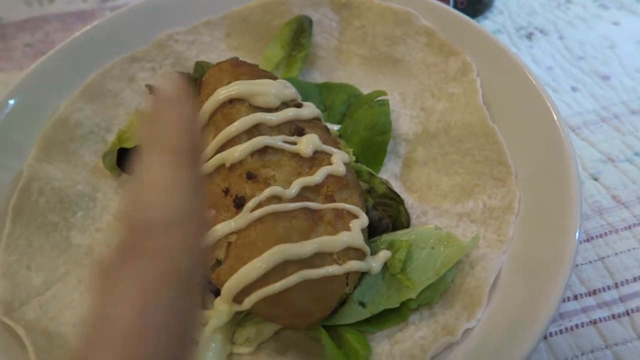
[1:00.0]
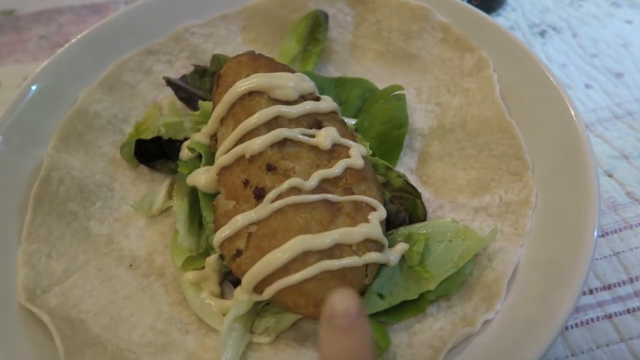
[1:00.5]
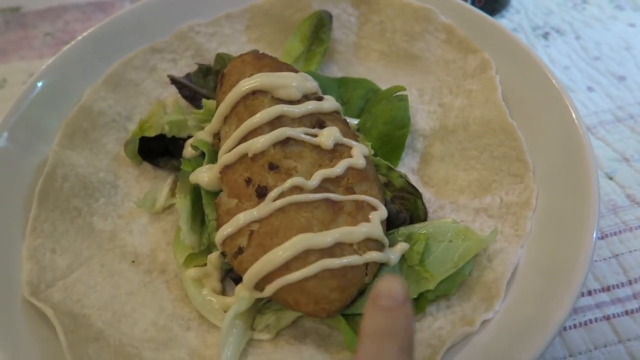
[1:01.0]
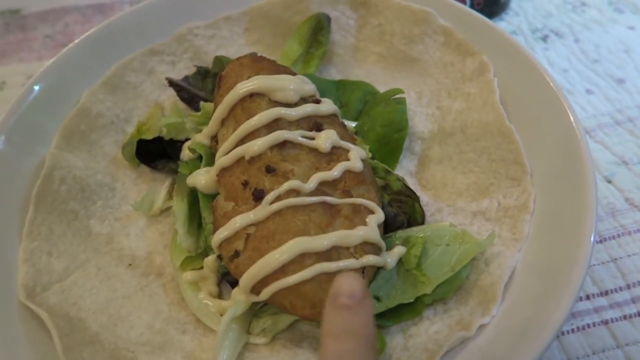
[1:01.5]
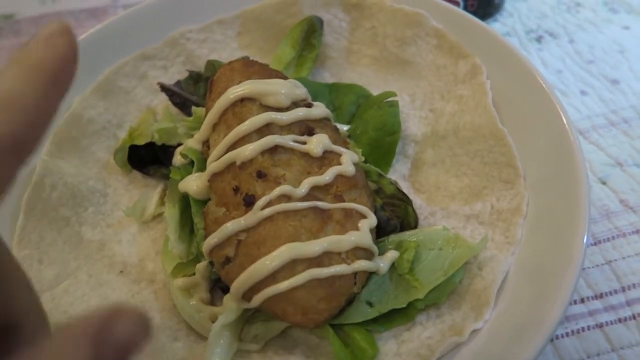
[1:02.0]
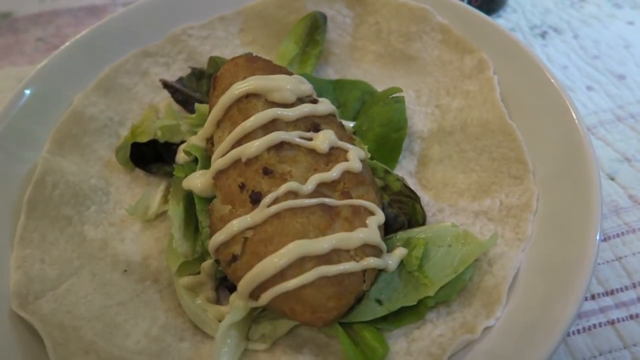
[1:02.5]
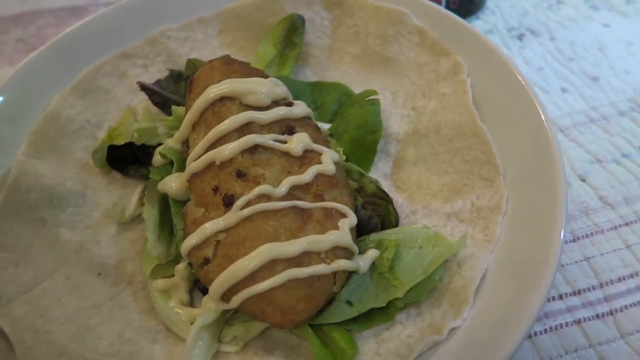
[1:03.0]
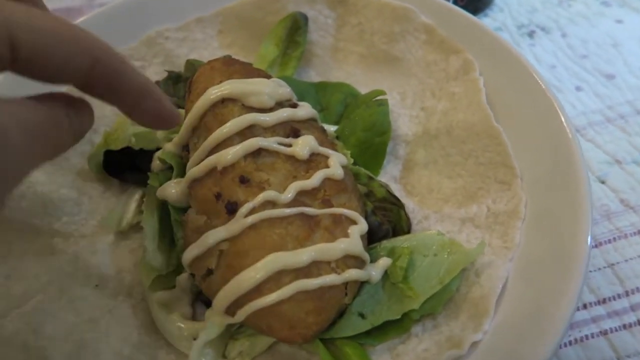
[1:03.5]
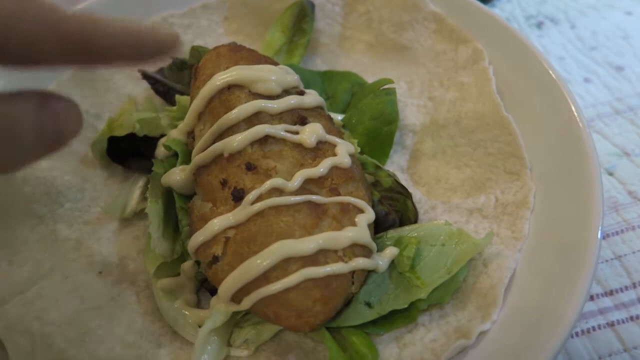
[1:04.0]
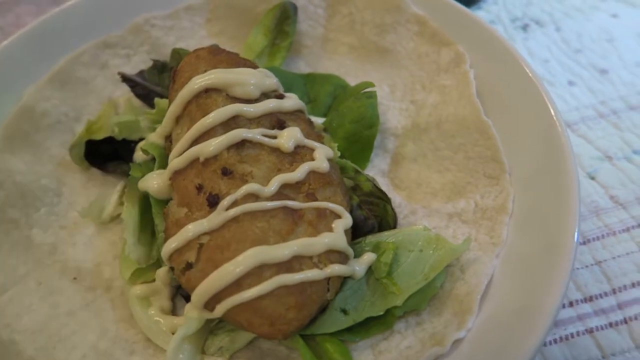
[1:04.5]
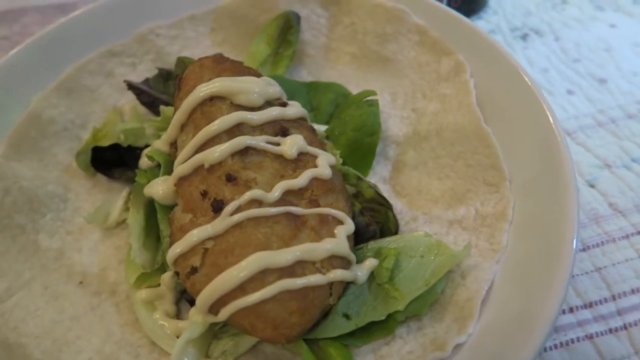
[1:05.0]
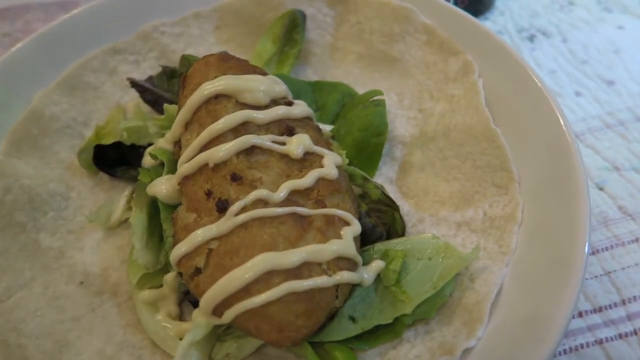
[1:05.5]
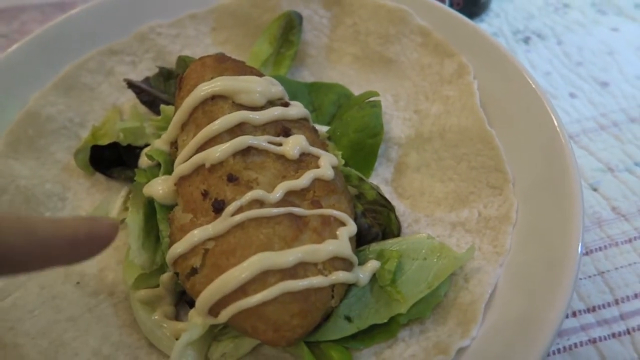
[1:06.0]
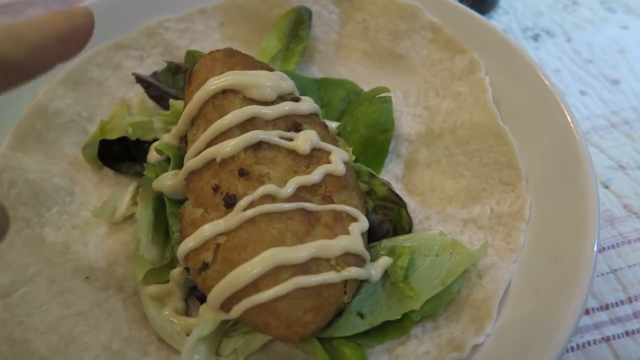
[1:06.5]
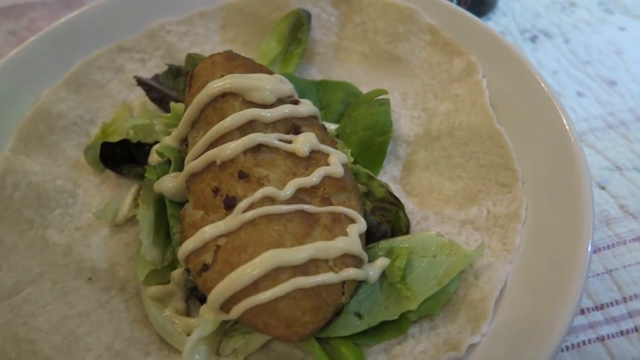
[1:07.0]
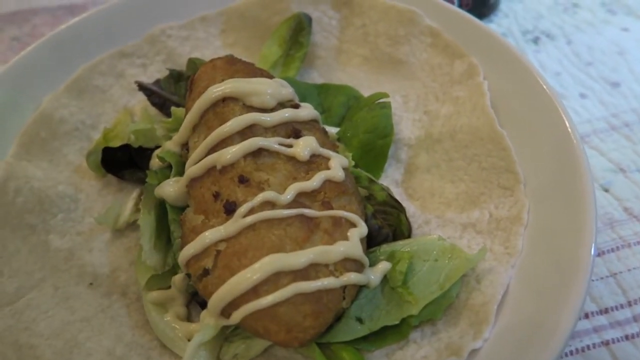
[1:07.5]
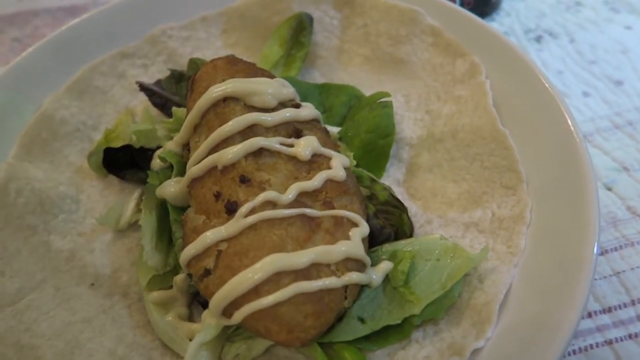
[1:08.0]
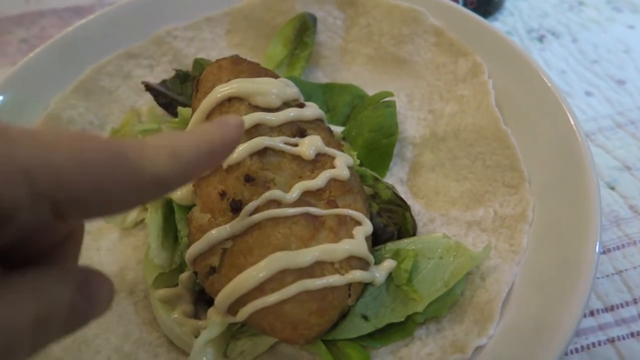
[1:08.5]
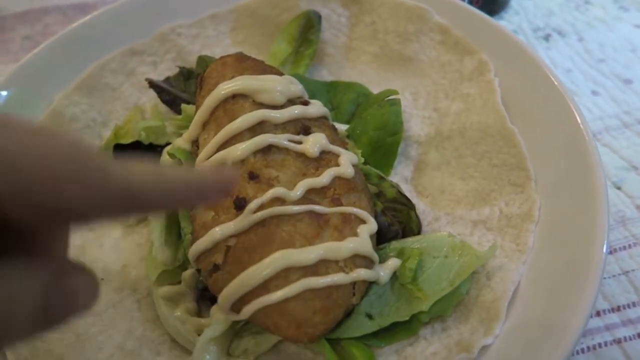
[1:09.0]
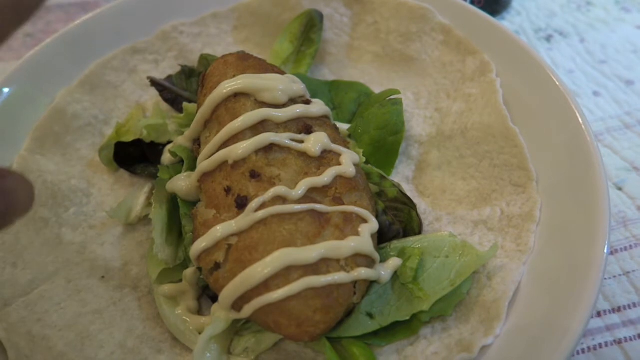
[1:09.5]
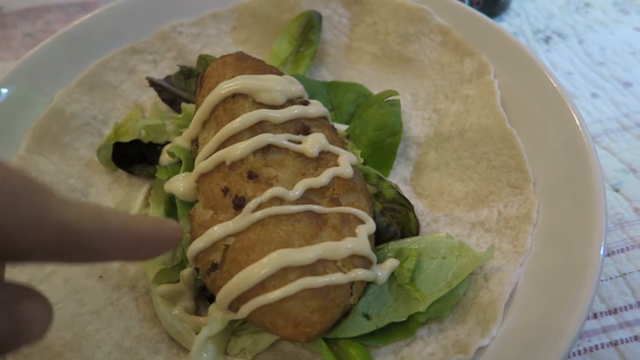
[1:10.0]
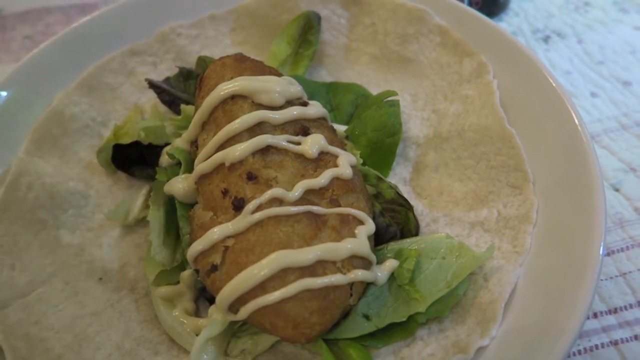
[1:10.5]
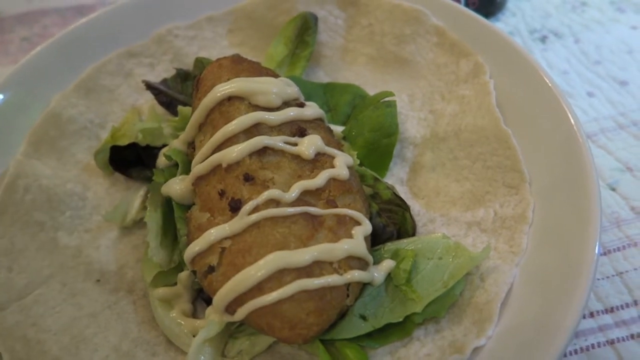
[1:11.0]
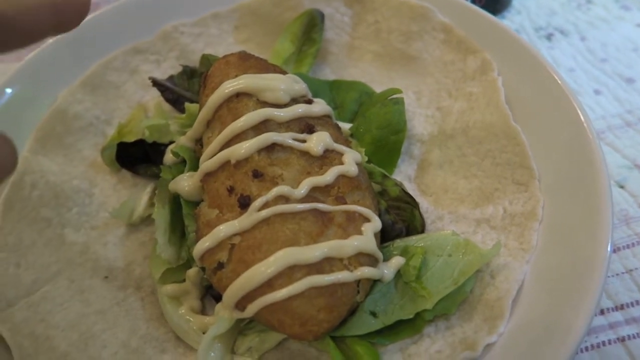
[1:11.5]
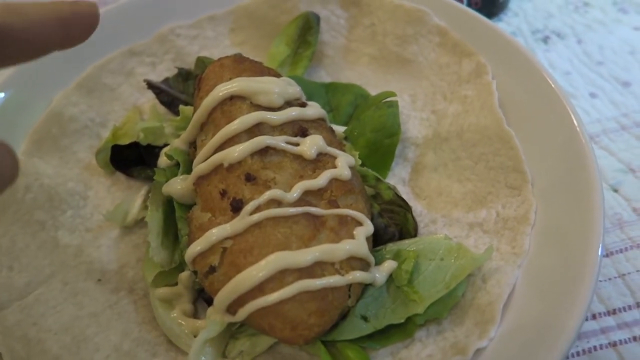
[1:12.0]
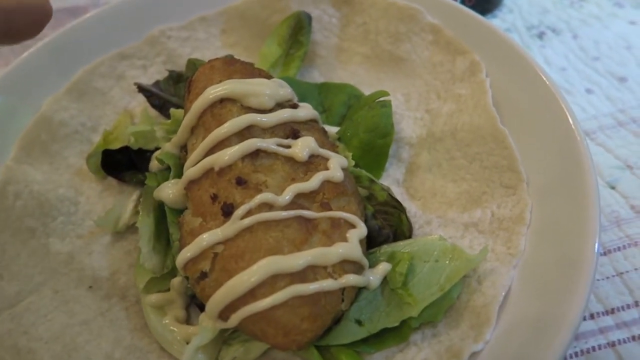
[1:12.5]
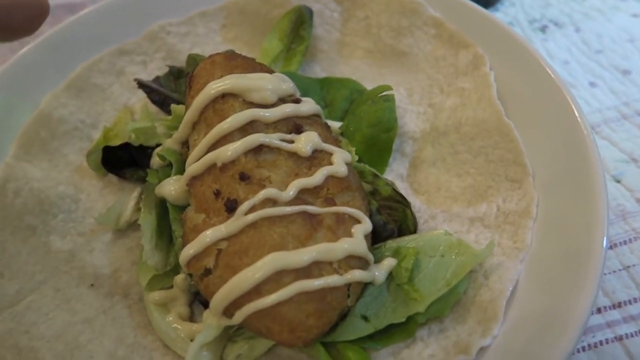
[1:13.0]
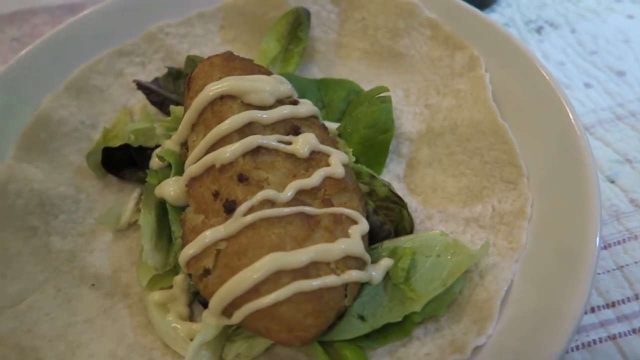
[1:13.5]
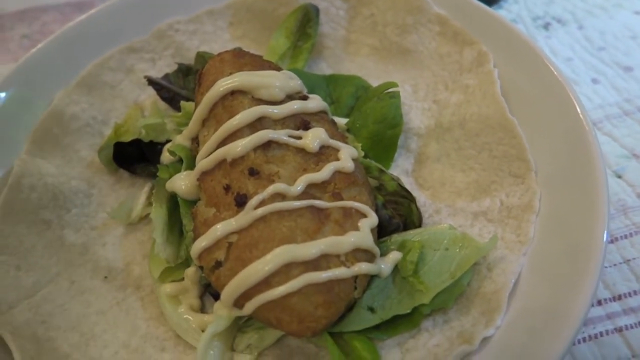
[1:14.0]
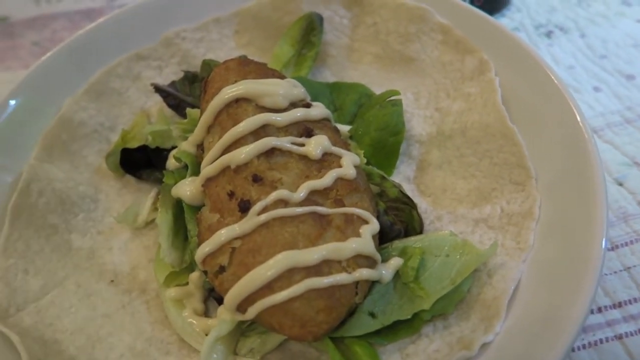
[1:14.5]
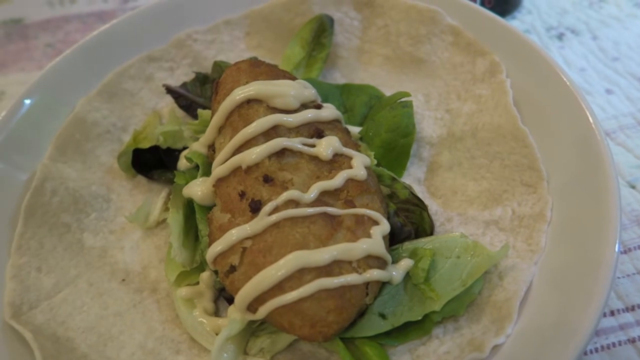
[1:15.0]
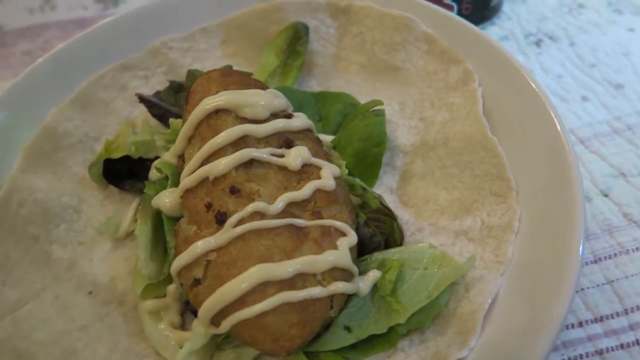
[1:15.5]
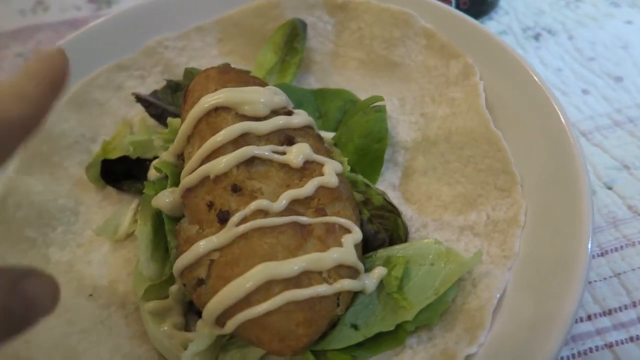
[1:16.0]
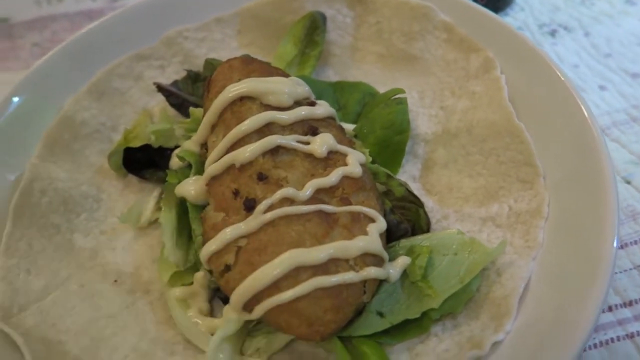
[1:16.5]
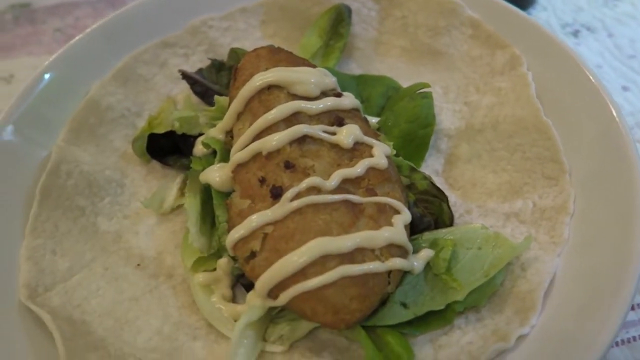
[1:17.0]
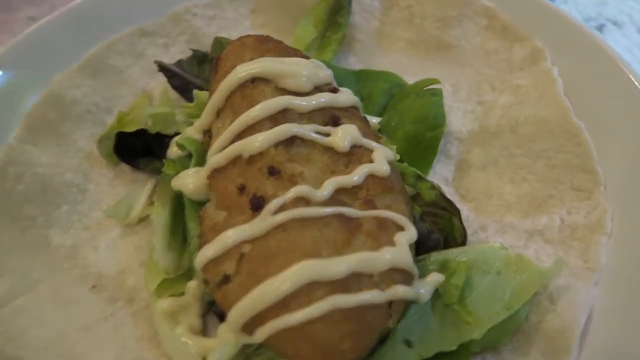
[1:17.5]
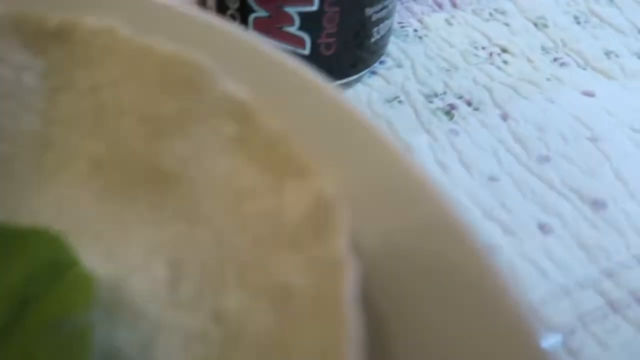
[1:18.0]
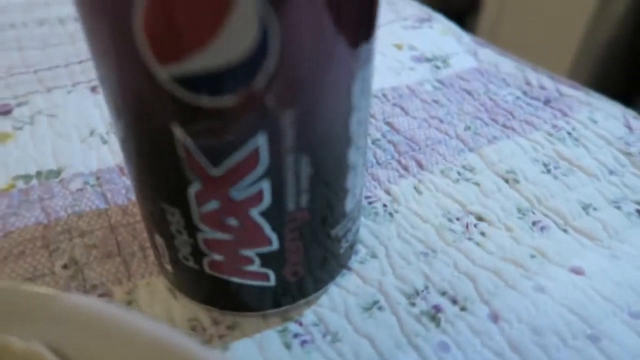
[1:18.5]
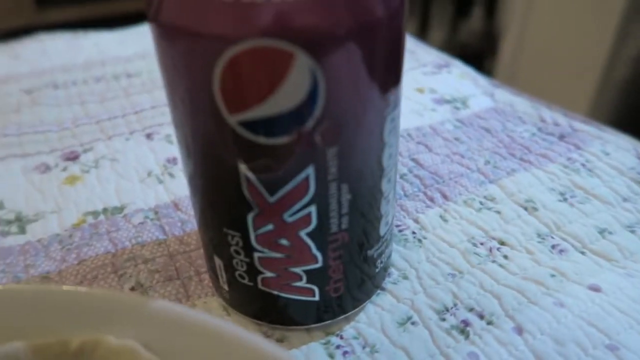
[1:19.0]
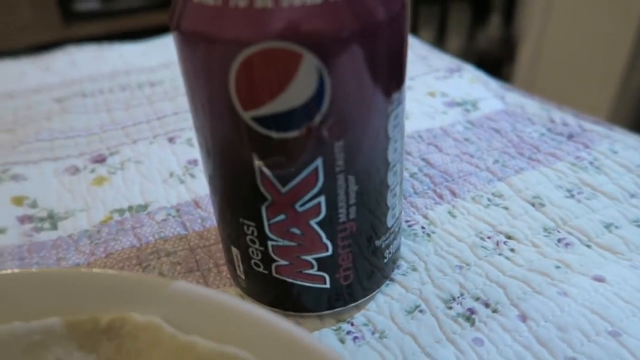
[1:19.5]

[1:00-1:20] A plate holds two rotis with lettuce on top, then a fried chicken breast cooked well done, with squeezes of mayonnaise on top of the chicken breast in a zigzag design. A hand points at the food as someone explains it. On the other side, next to the plate, is a can of drink, and the food is ready to eat.